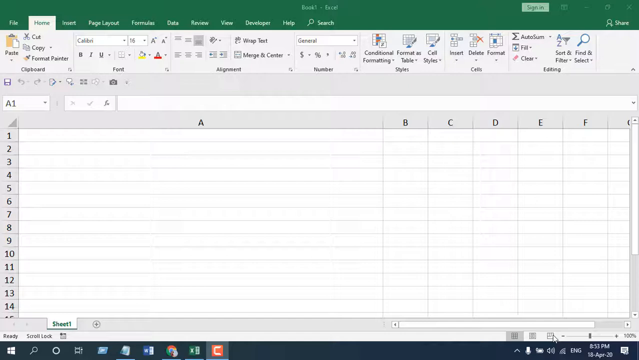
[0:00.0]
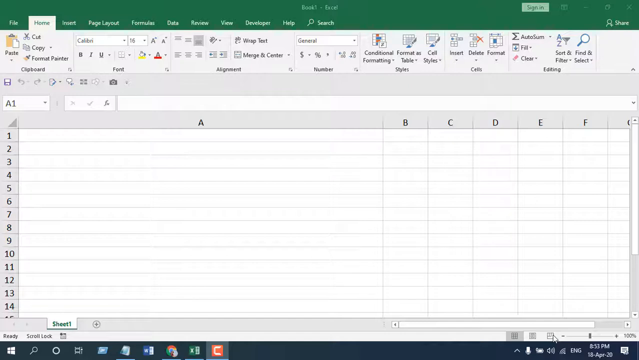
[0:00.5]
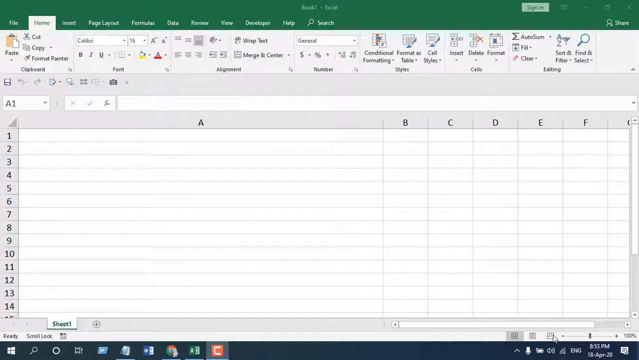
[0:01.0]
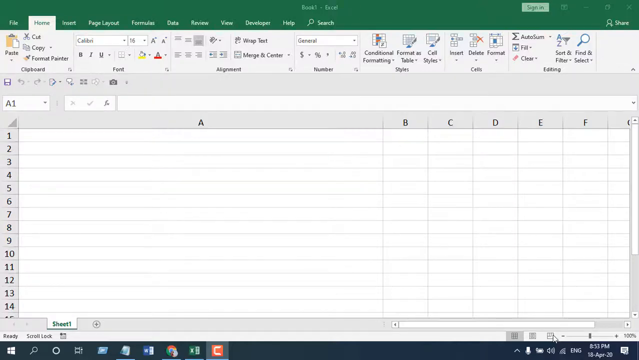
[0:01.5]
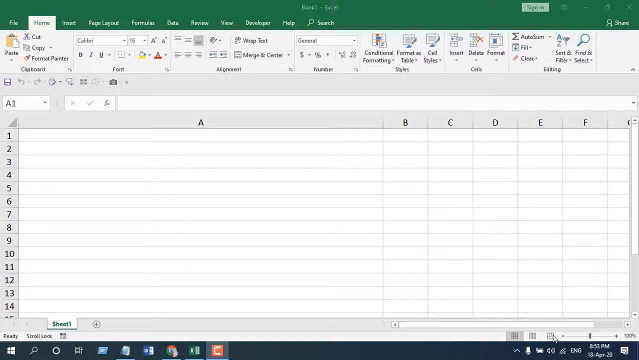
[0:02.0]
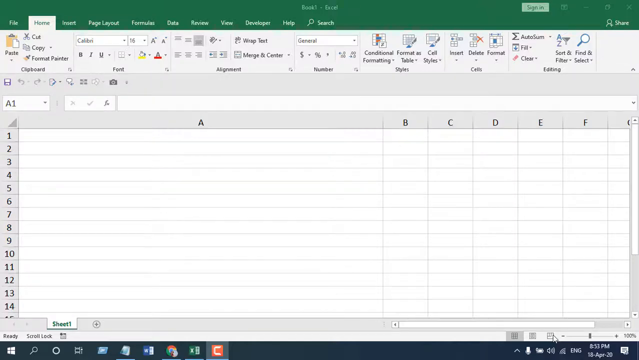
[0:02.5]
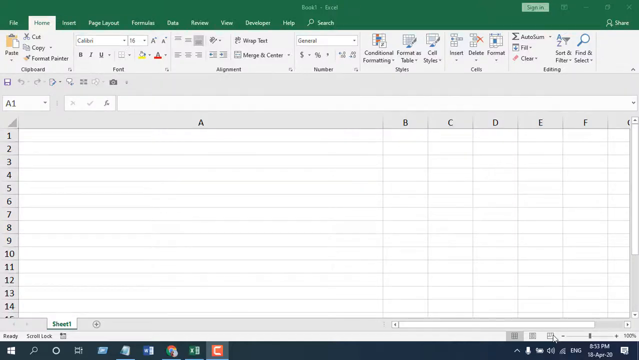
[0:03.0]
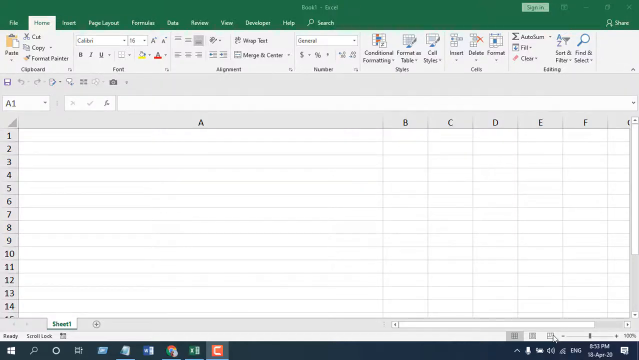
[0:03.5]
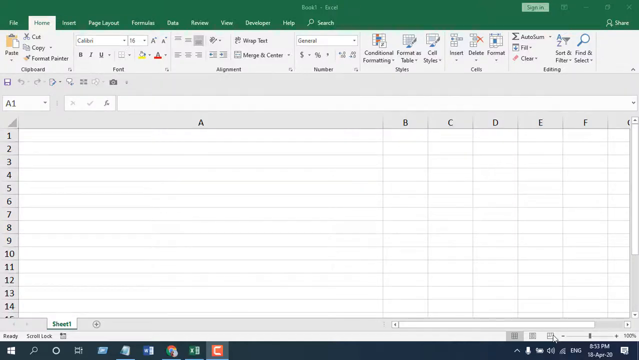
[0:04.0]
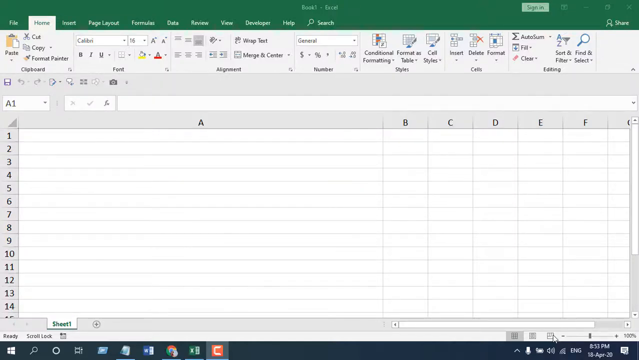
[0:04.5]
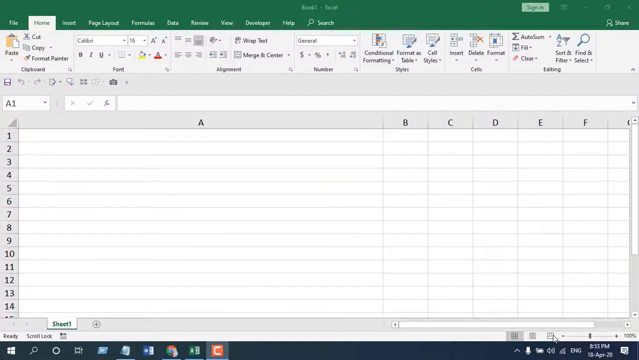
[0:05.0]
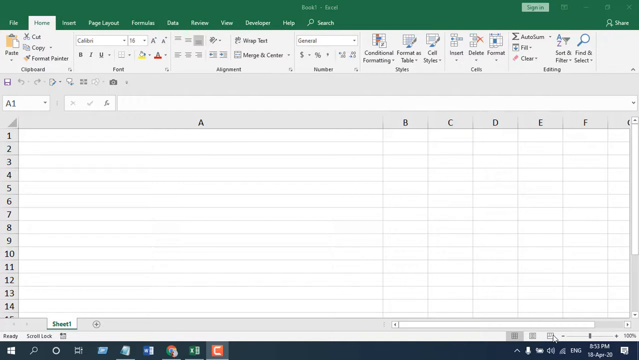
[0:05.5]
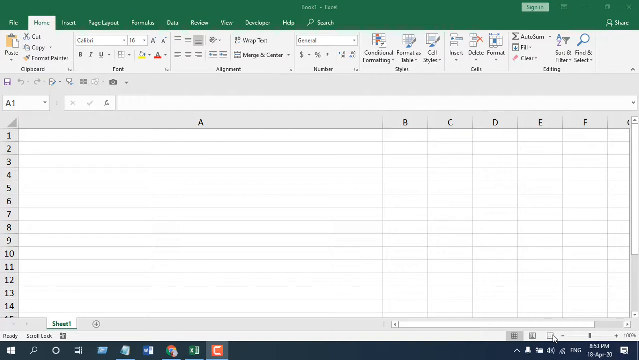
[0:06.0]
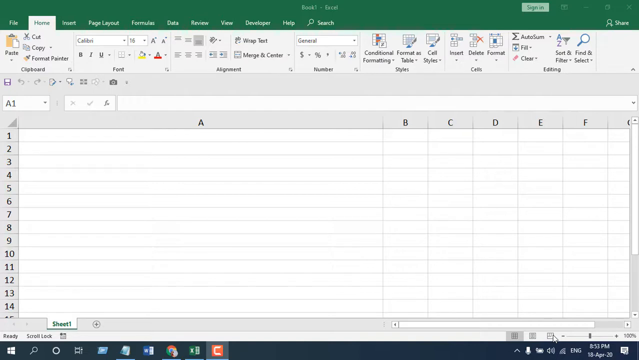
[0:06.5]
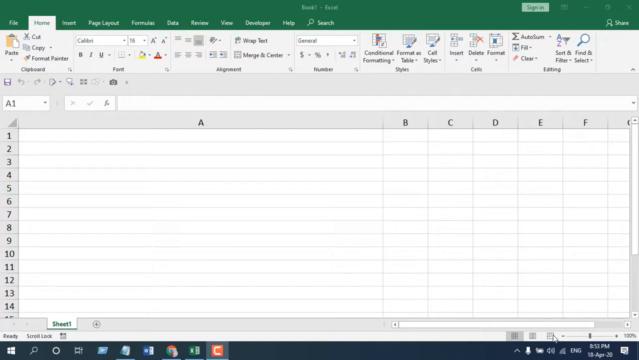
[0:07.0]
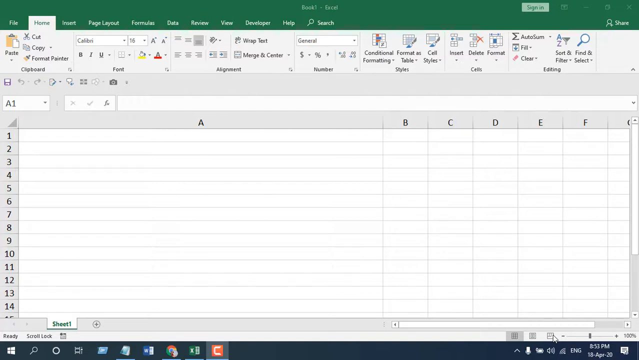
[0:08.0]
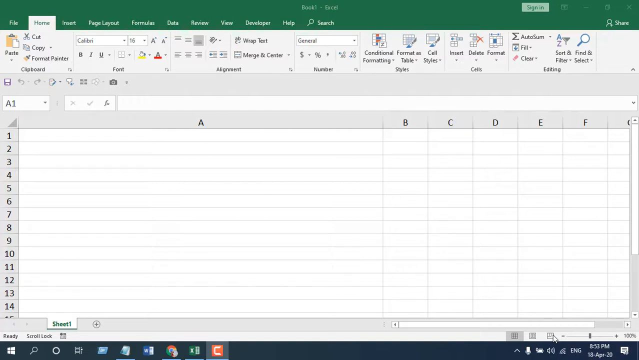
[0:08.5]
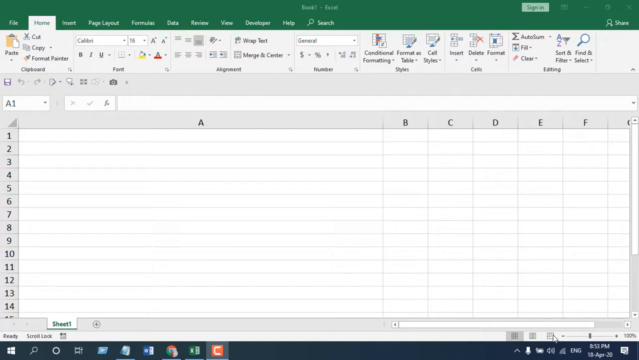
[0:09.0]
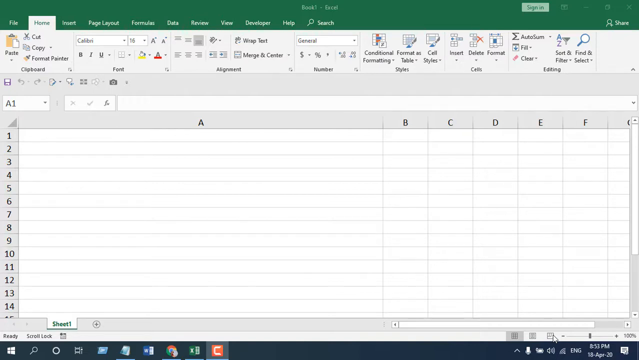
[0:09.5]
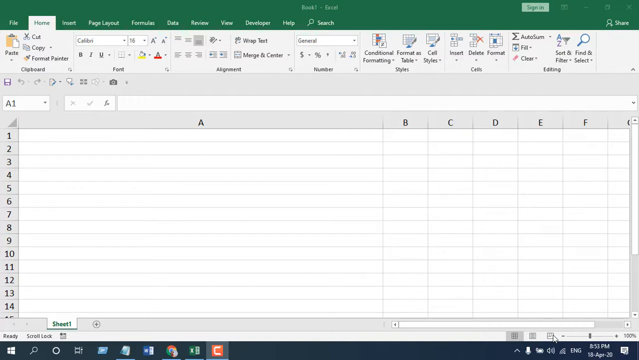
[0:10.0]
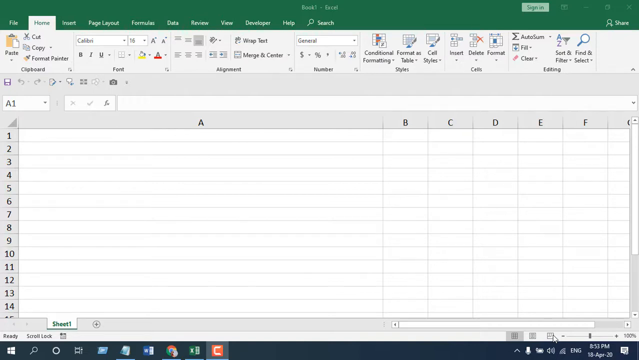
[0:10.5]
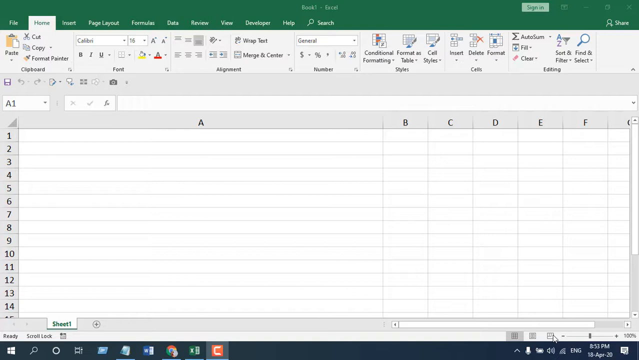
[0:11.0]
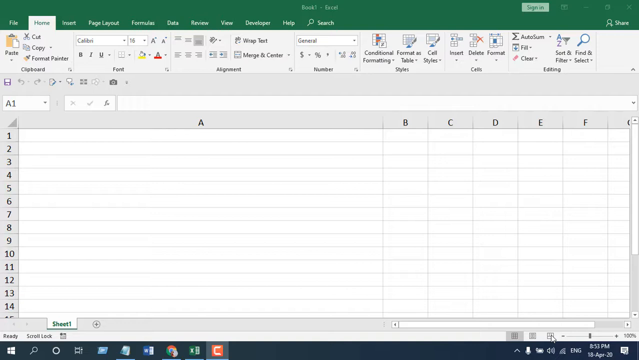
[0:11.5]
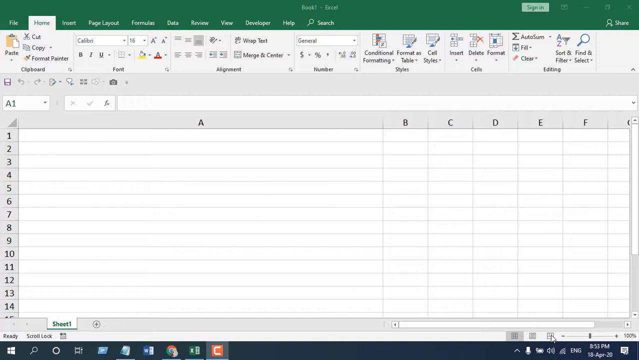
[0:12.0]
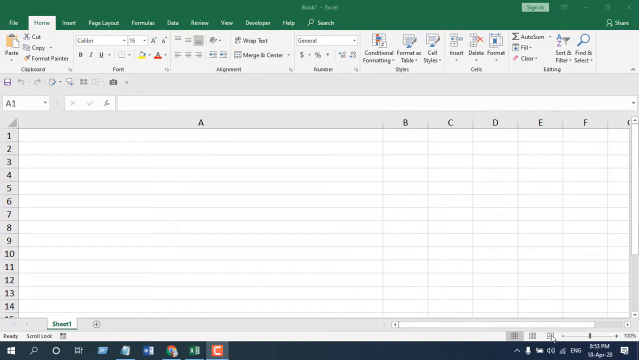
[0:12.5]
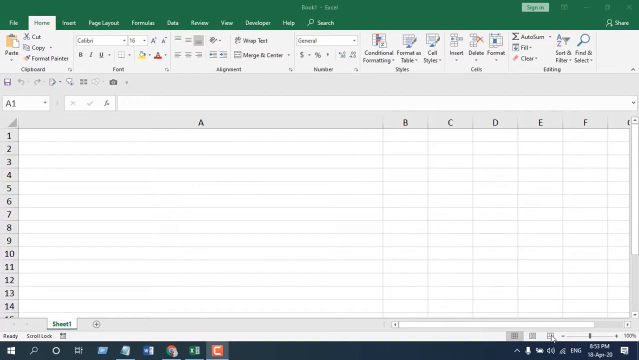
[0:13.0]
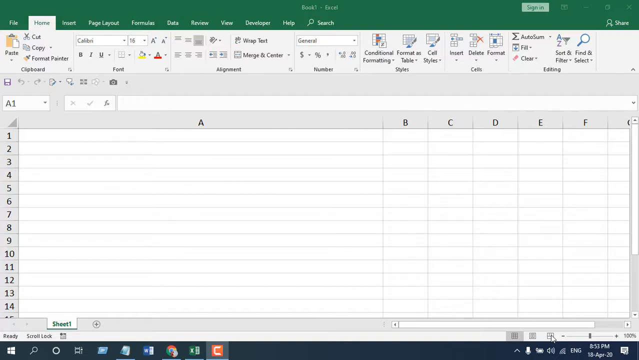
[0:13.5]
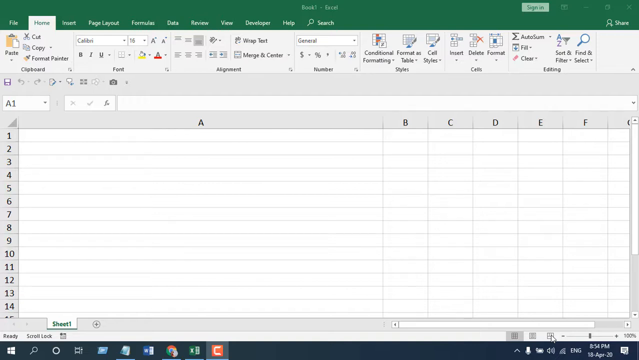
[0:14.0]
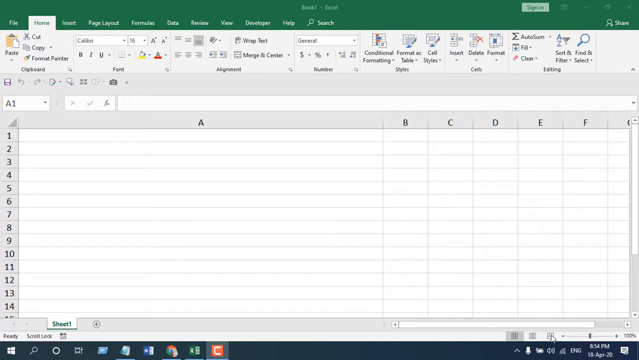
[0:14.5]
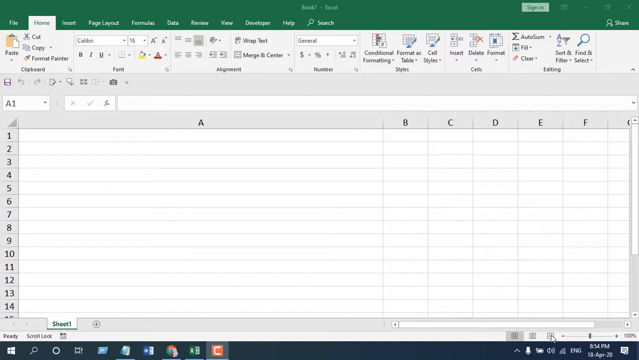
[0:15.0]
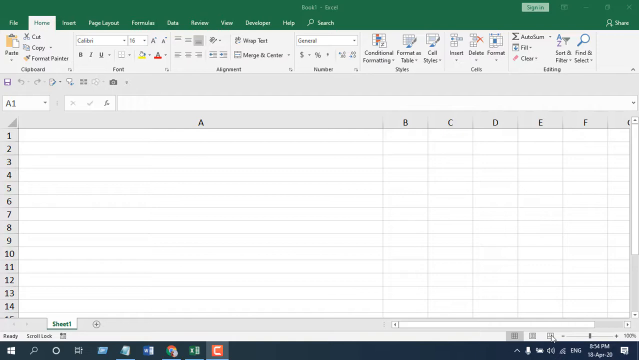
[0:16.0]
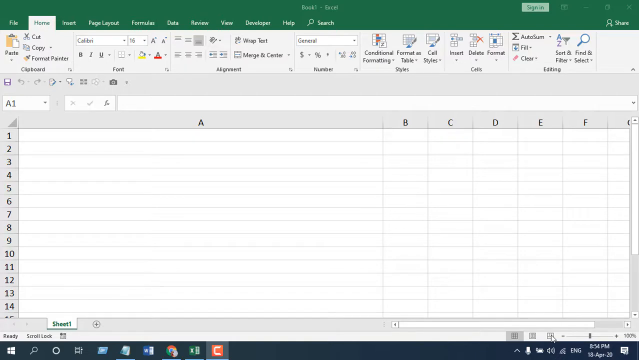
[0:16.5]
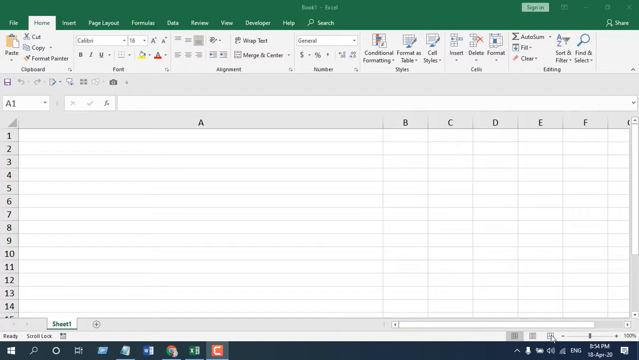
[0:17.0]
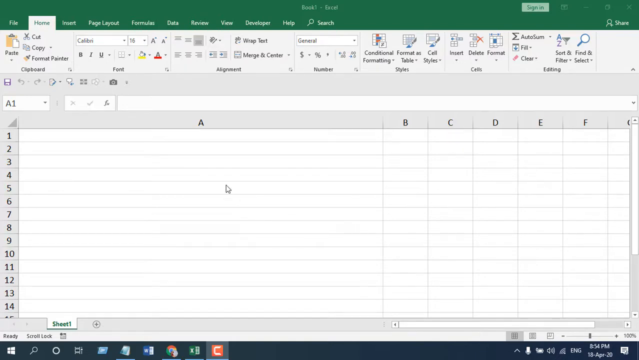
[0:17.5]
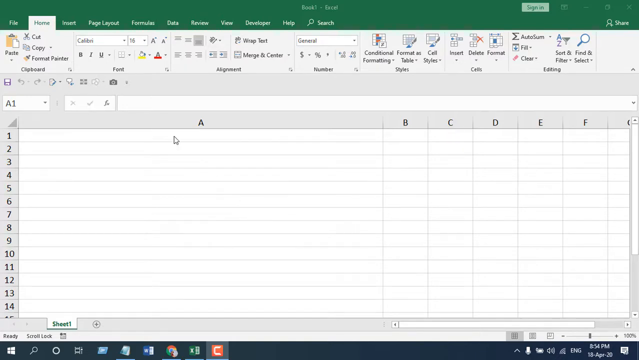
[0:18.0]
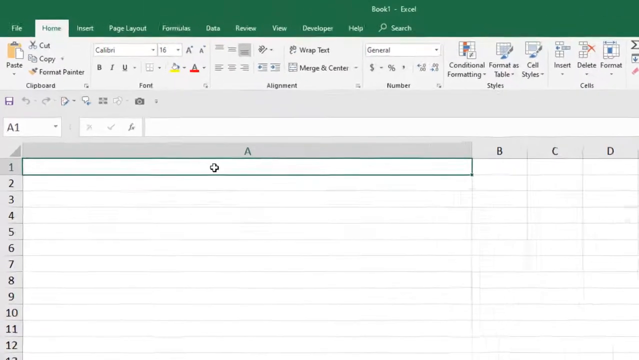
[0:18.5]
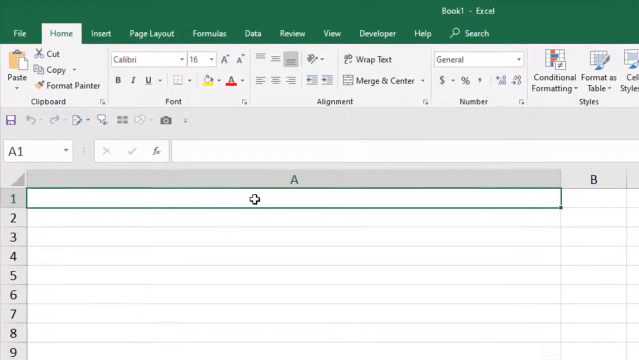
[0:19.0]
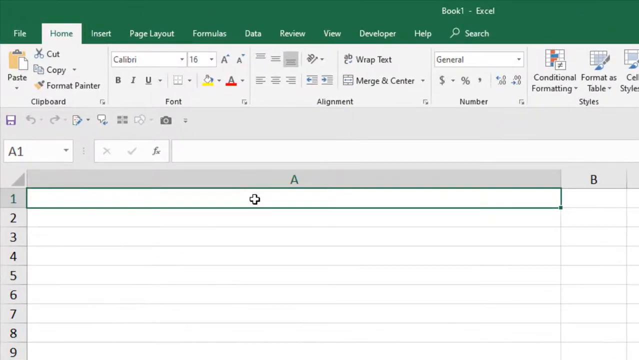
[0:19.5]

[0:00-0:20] An Excel spreadsheet is open, with the tabs File, Home, Insert, Page Layout, Formulas and Data along the top. There is no title at the top; it just says "book one". At the far right there is a sign that is a white box, an icon like an open book whose purpose is unclear, and a minus-looking sign for minimizing the screen. The Home tab appears to be selected, as it is lit up and white. Rows 1 through 14 are visible, plus a little of row 15. Column A is very wide, followed by columns B, C, D, E and F. The view zooms in a little on column A, and when it is clicked the cursor becomes a plus sign and a green border appears around the cell. Below the tabs is a clipboard icon with a small white piece of paper, labeled "paste" with a drop-down. To its right are cut, copy and format painter, all stacked together. The font is Calibri with a drop-down, the size is 16, and there are bold and italic buttons.